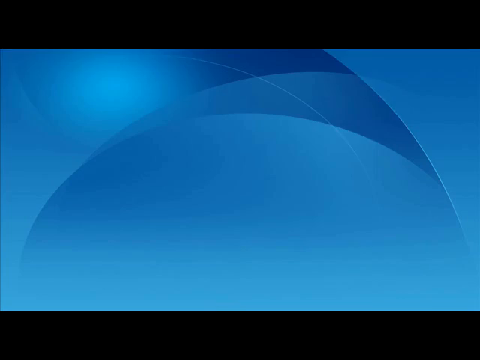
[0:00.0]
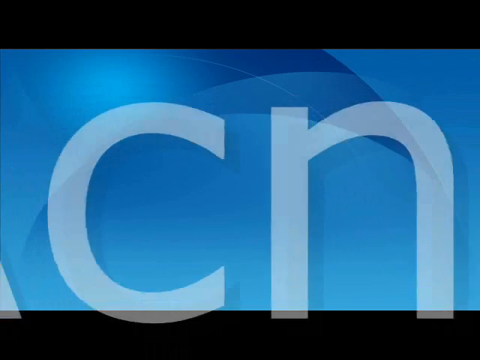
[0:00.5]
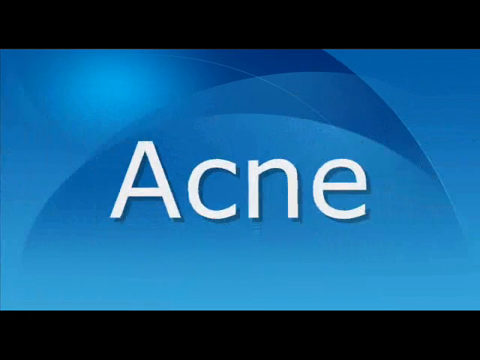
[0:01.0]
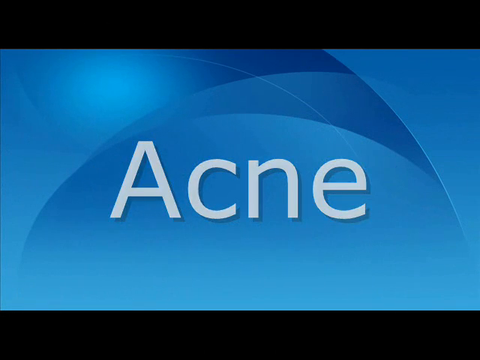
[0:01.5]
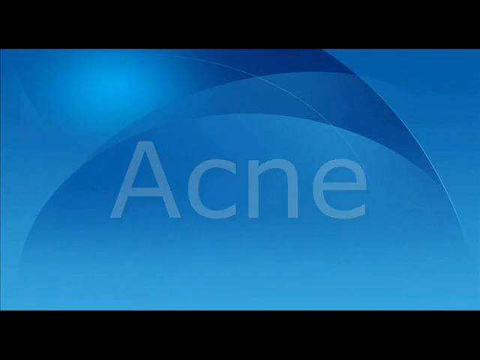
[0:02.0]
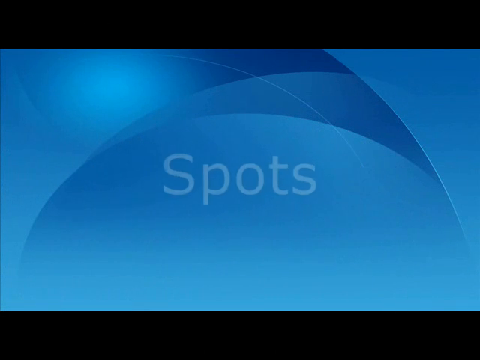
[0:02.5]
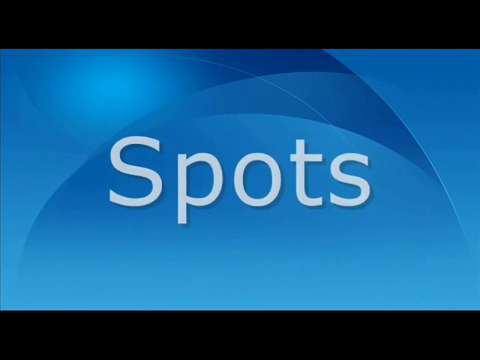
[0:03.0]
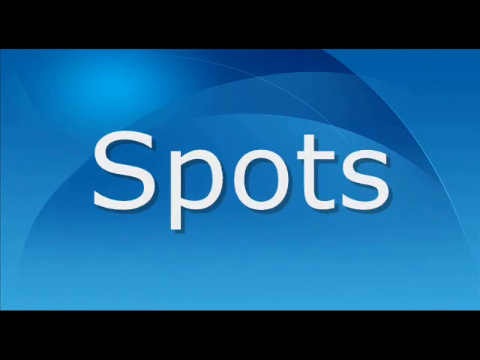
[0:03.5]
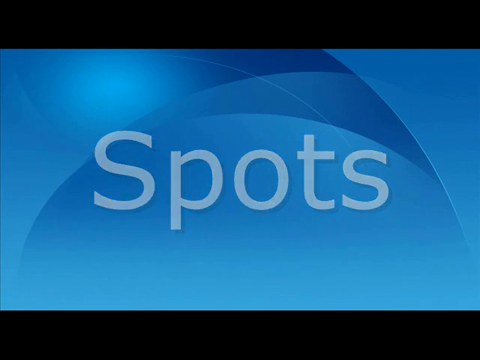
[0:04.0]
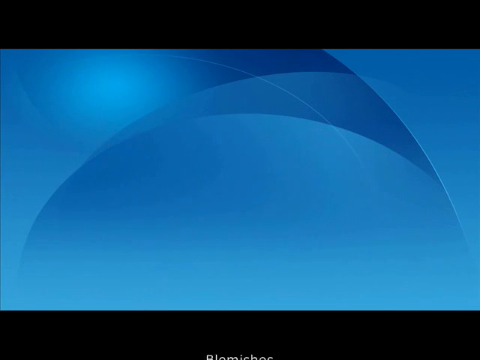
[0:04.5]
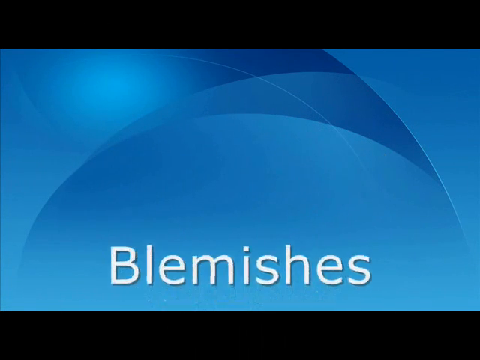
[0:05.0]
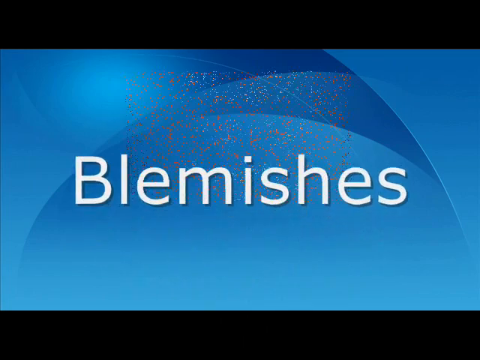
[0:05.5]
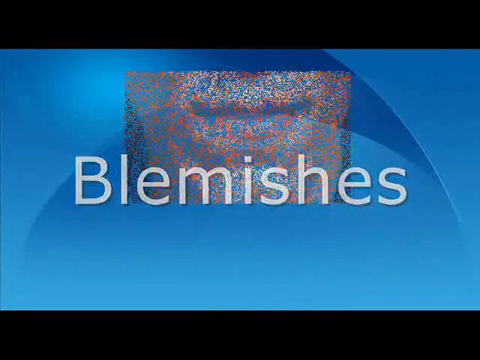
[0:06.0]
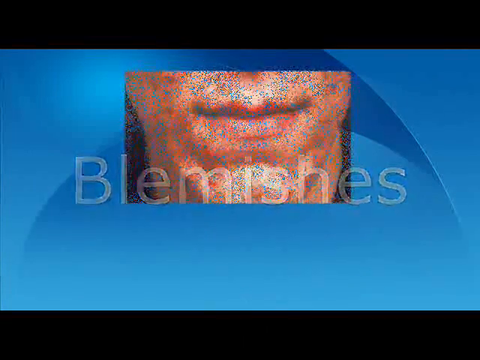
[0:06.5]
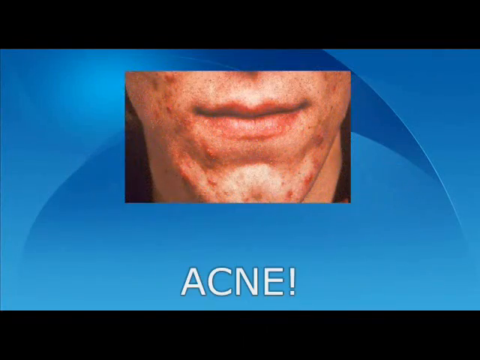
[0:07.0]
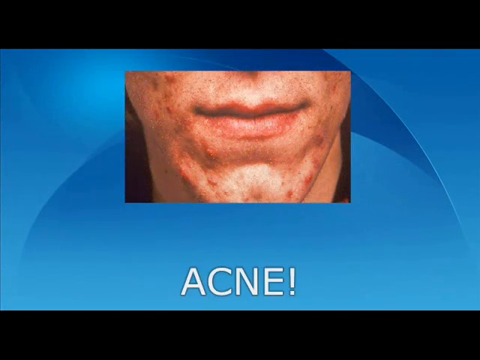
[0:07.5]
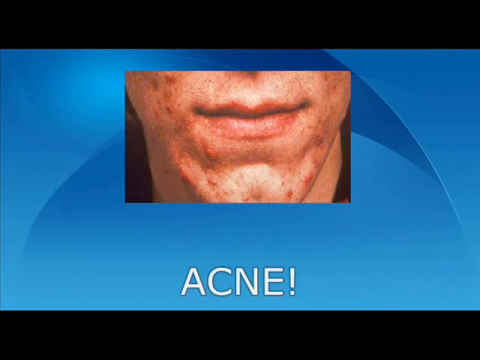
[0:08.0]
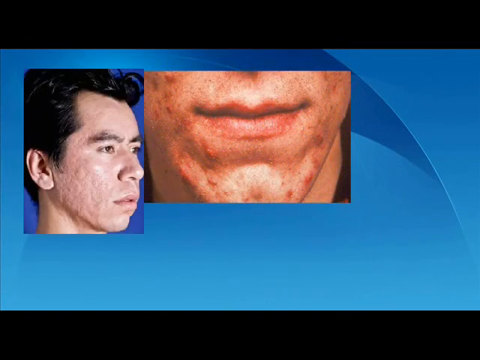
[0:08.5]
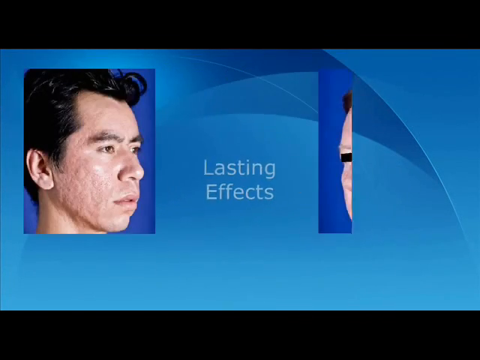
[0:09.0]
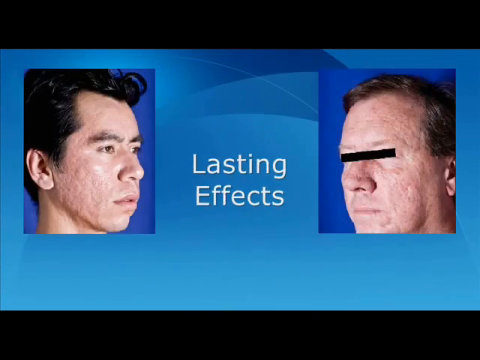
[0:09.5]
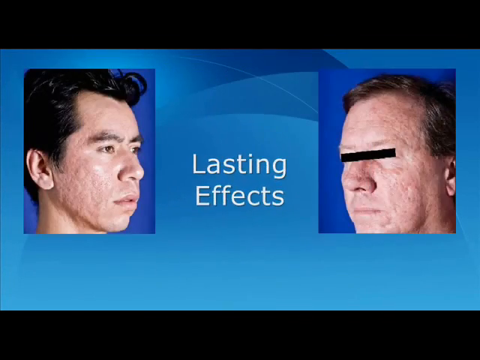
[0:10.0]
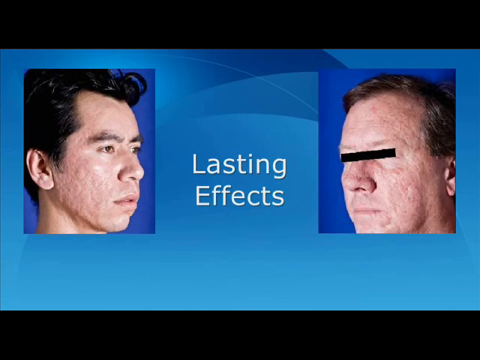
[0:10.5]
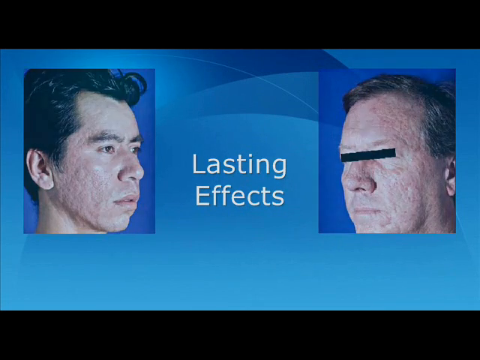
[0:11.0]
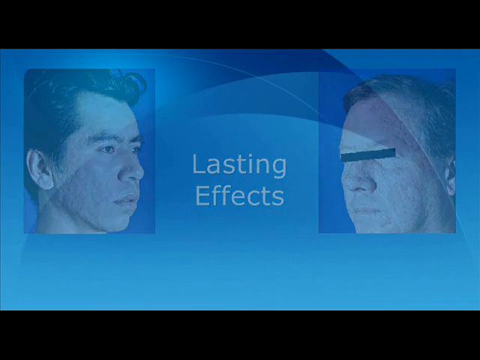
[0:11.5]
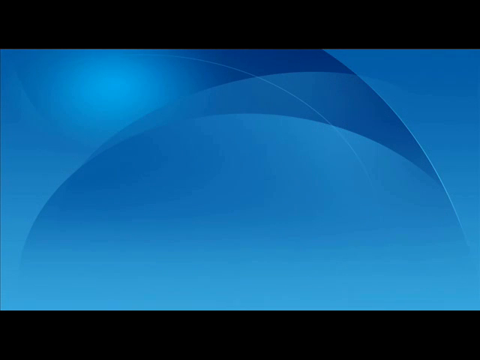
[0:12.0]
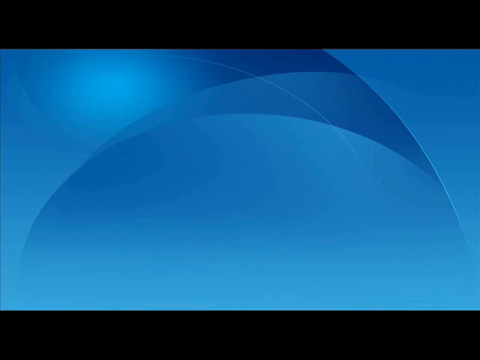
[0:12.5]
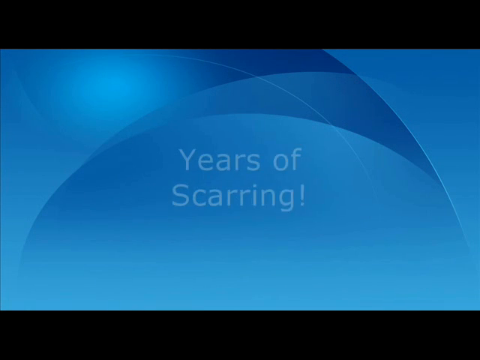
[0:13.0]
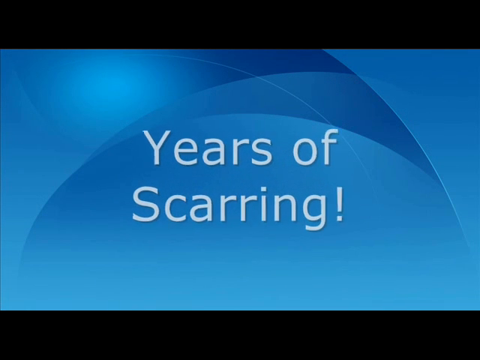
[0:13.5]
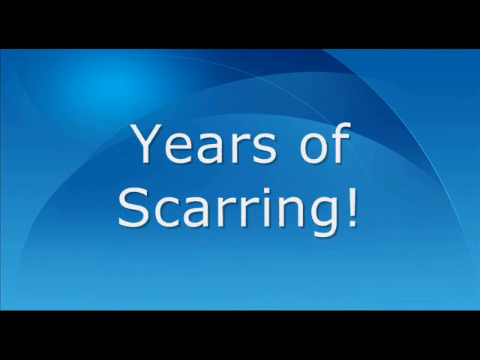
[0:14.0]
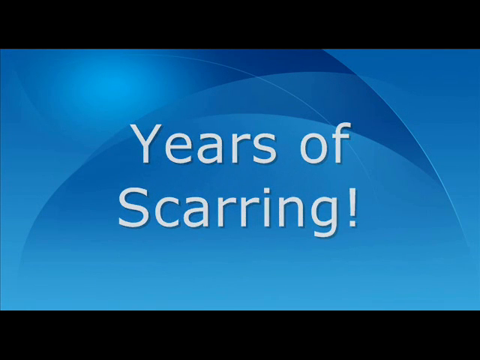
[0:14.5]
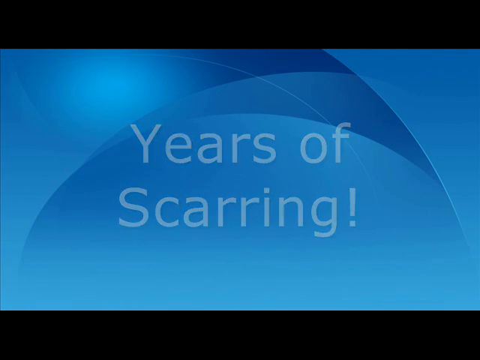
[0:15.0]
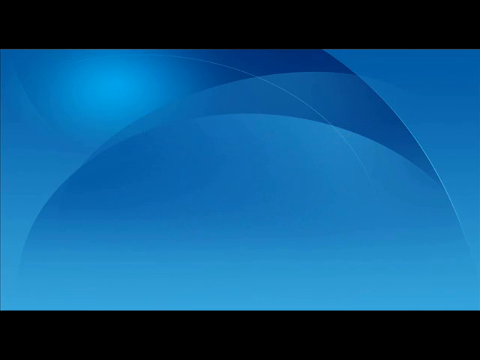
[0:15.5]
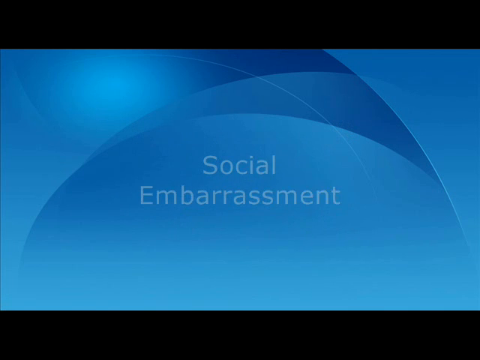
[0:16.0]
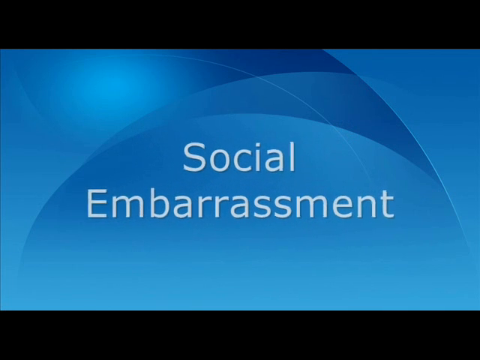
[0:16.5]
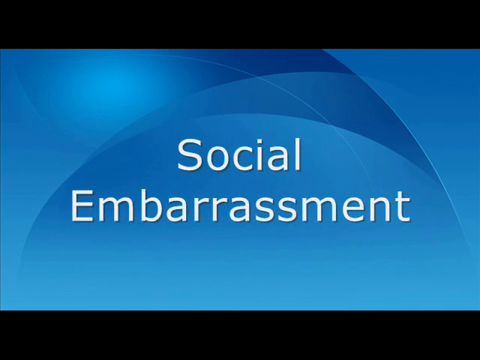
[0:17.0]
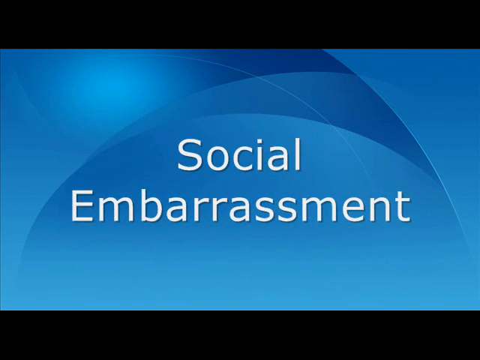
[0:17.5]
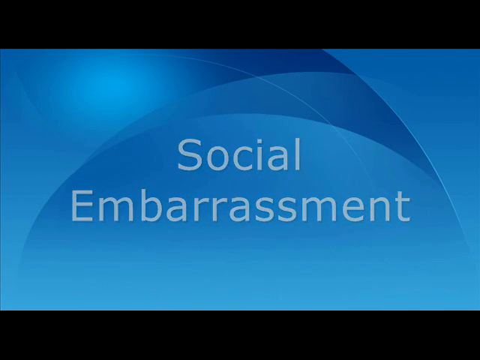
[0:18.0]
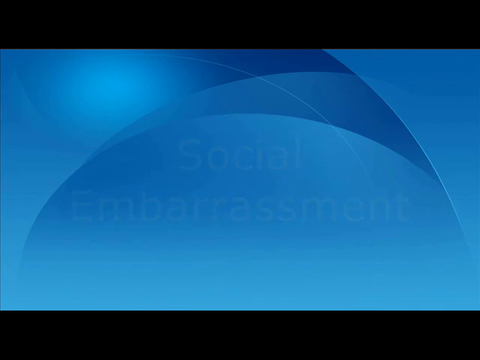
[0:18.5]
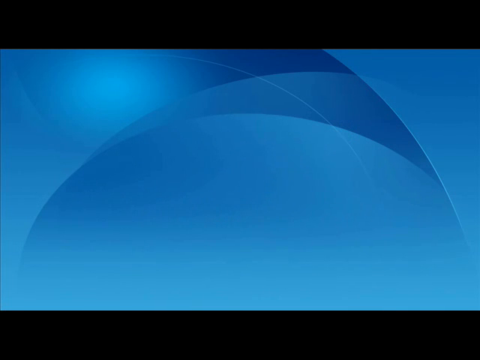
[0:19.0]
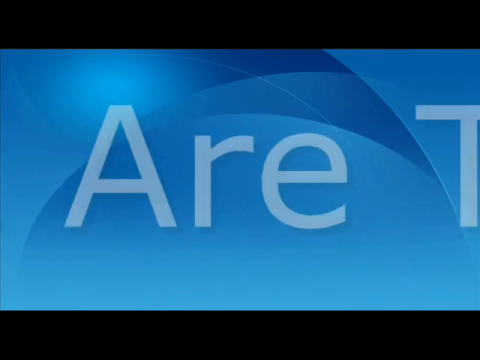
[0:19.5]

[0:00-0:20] The video starts with a blue title card, with black bars on the top and bottom of the video. White text reading "acne" appears in the center of the blue title card and then disappears. New text reading "spots" appears and disappears, followed by text reading "blemishes." A photo of someone with heavy acne on their chin and cheeks then appears, with text underneath reading "acne." Two new photos of two different men with scarred faces appear; the man on the left is looking toward the right, and the man on the right is looking toward the left and has his eyes blocked out with a black bar for privacy. White text reading "lasting effects" appears. The photos and words disappear, and new words appear reading "years of scarring. Social embarrassment. What are they?" That text then disappears, leaving a solid blue screen for a second.